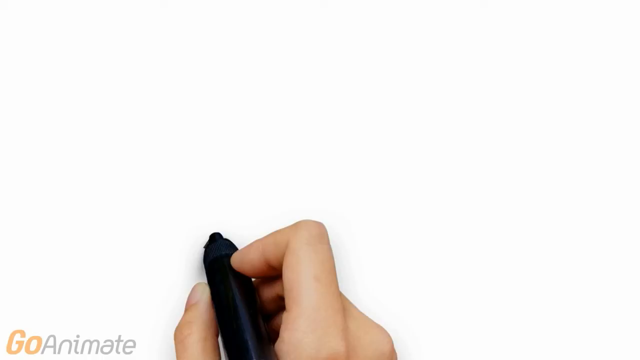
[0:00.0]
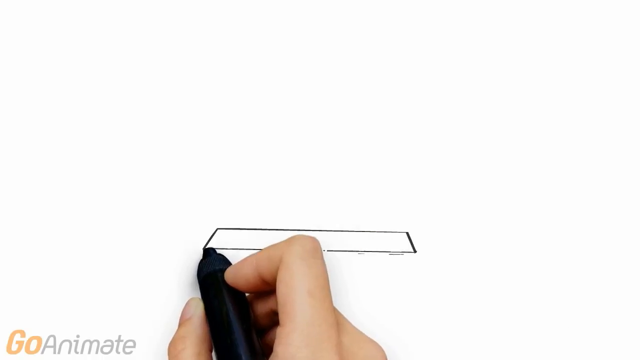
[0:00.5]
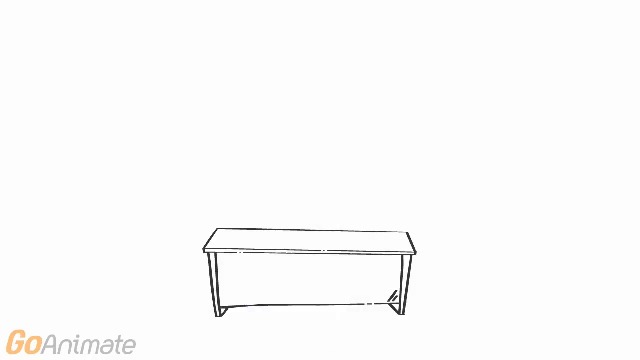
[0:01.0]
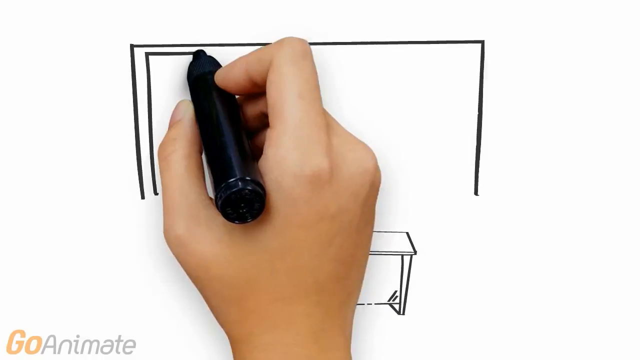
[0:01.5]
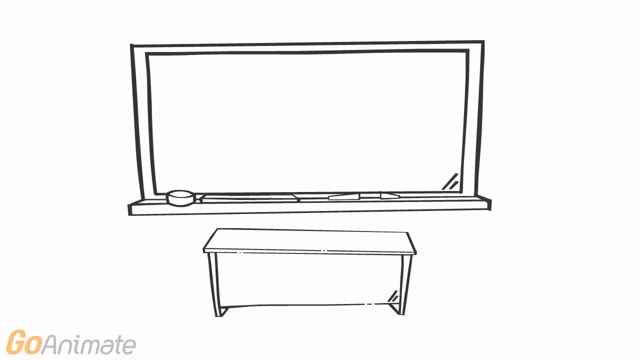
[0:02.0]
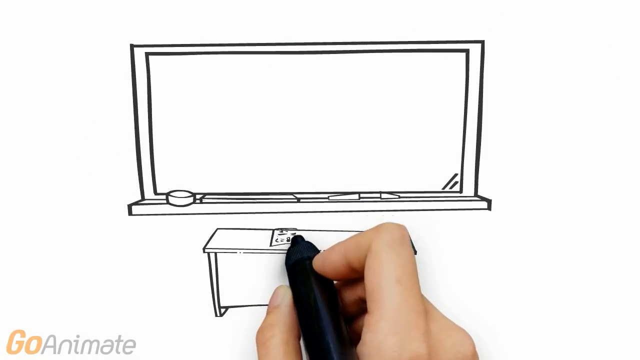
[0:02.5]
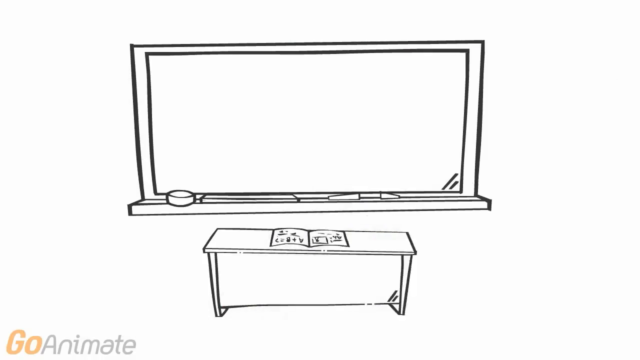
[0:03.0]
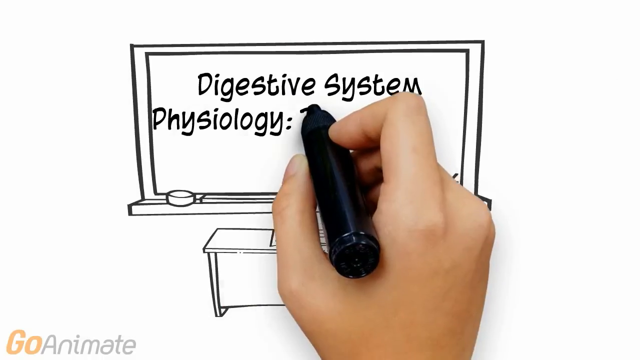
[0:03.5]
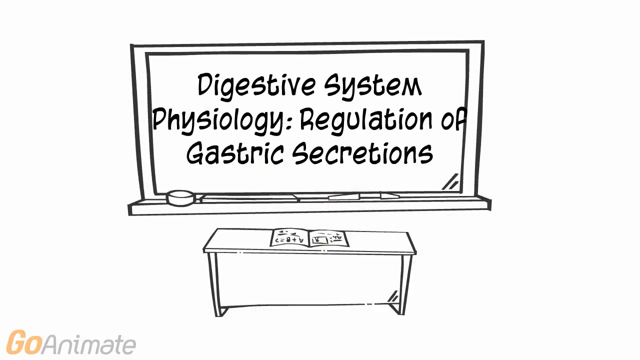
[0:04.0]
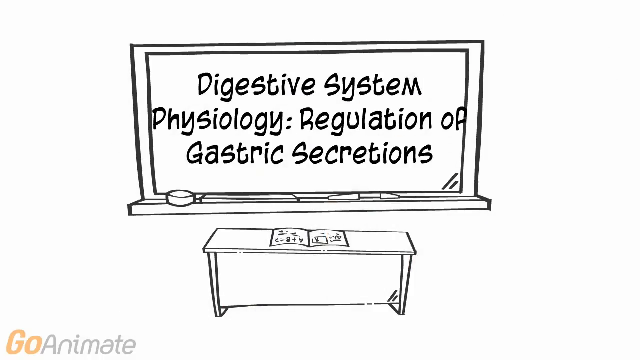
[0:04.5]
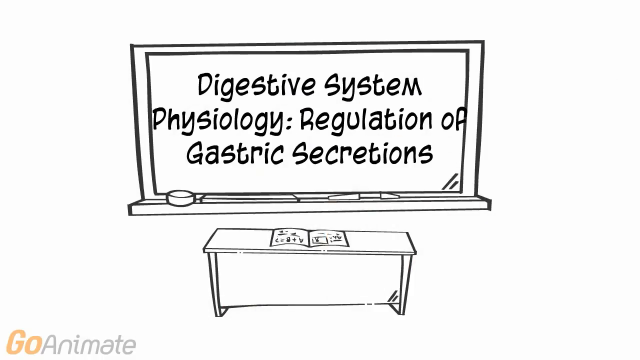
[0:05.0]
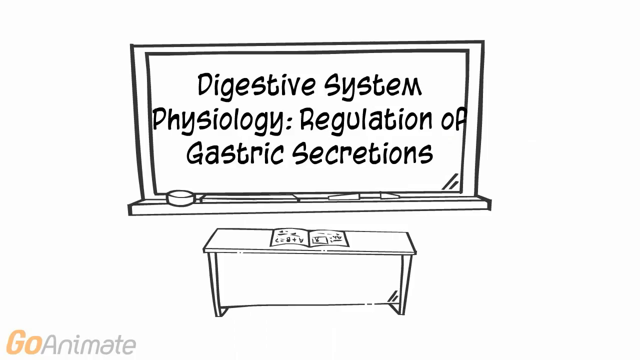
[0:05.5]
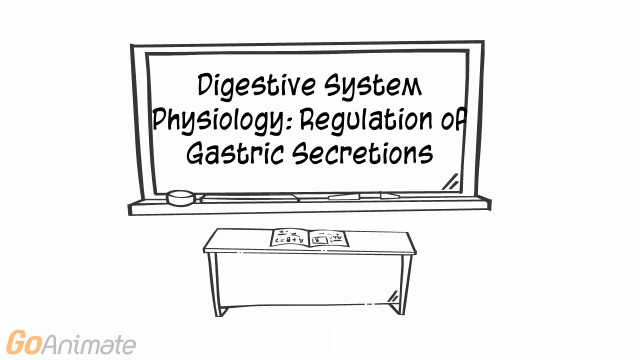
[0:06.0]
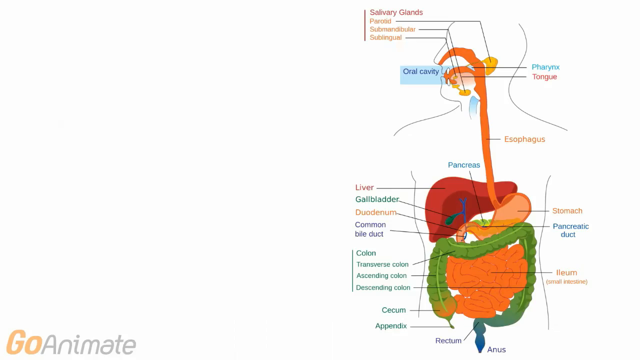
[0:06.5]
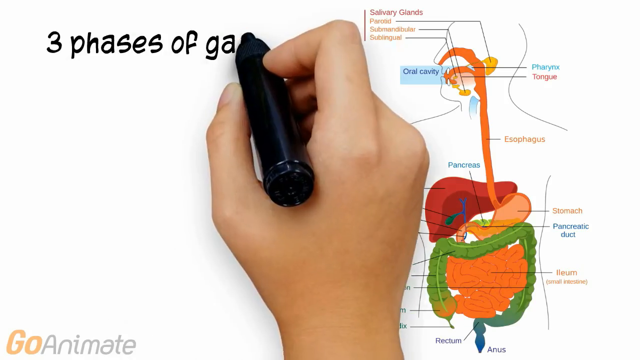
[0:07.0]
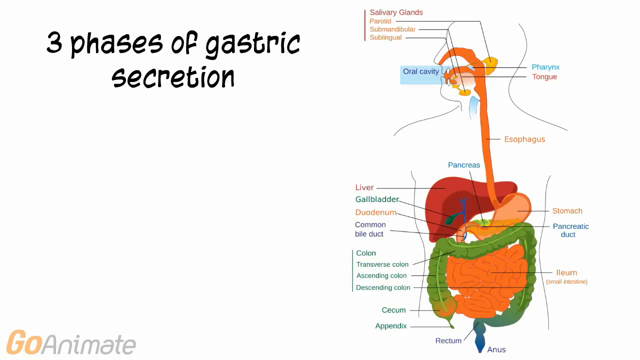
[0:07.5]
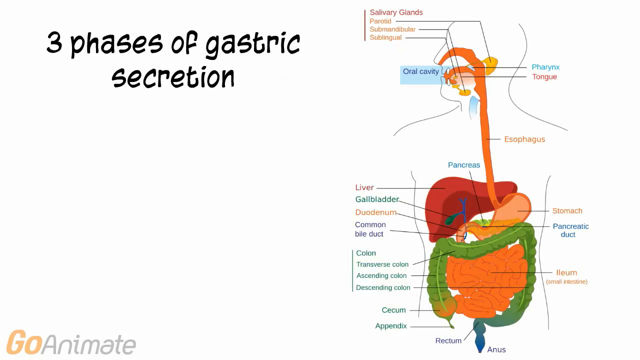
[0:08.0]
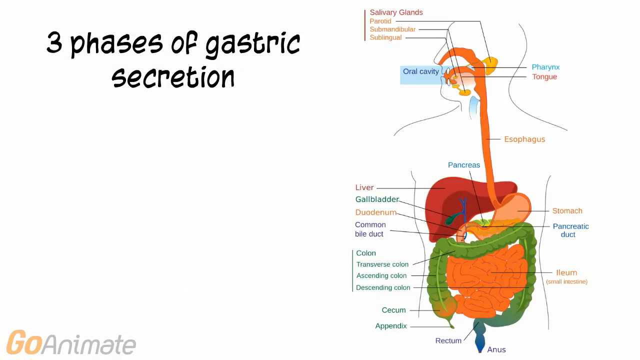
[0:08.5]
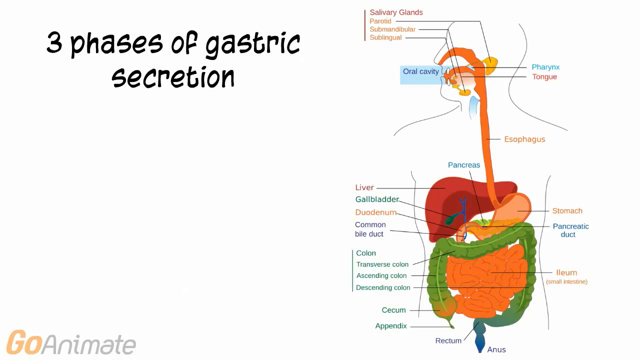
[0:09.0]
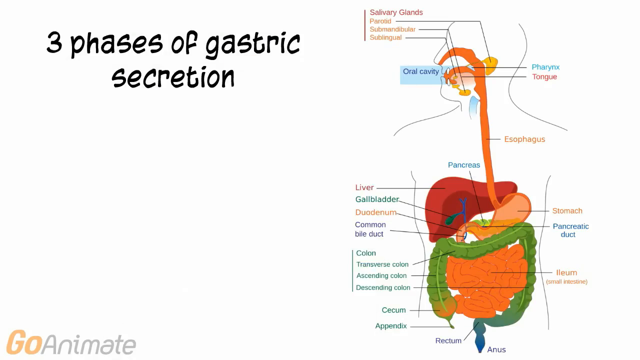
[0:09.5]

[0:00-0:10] A hand holding a permanent marker draws on a blank white canvas, sketching a school board, a white board, with a desk in front of it. Written inside the board is "digestive system psychology, regulation of gastric secretions." The scene transitions to another screen, also on a white canvas, where the hand writes "three phases of gastric secretion" with the permanent marker. A complete, detailed graph of a person's digestive system appears, with each part colored and labeled on the outside: the pancreas, the stomach, the colons, and on up to the mouth and the tongue.